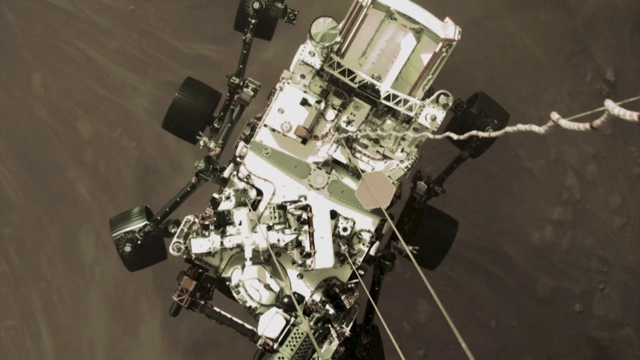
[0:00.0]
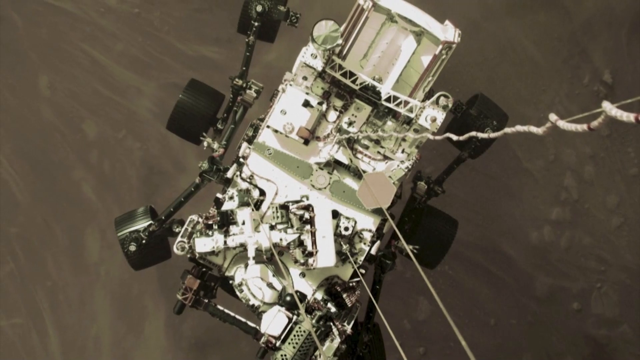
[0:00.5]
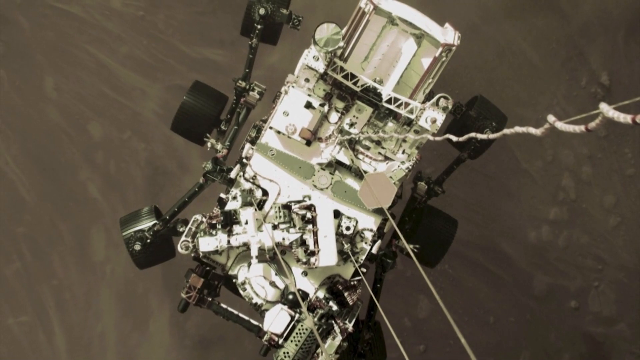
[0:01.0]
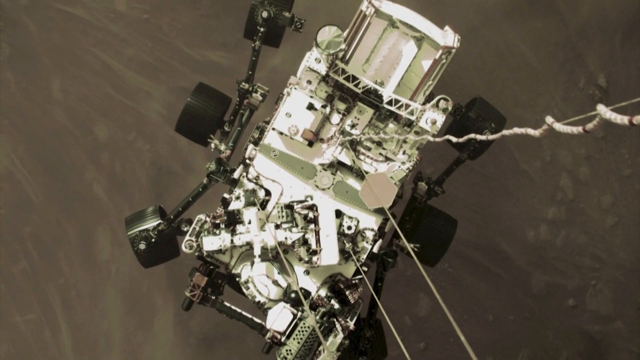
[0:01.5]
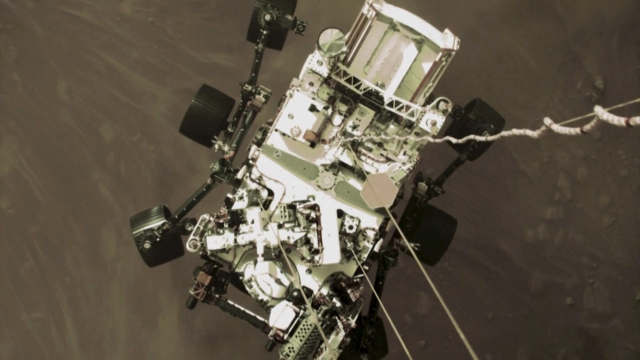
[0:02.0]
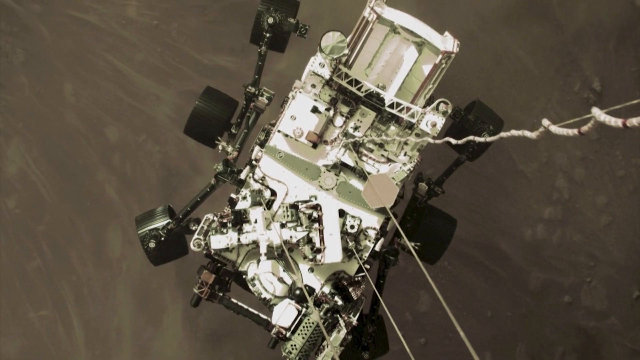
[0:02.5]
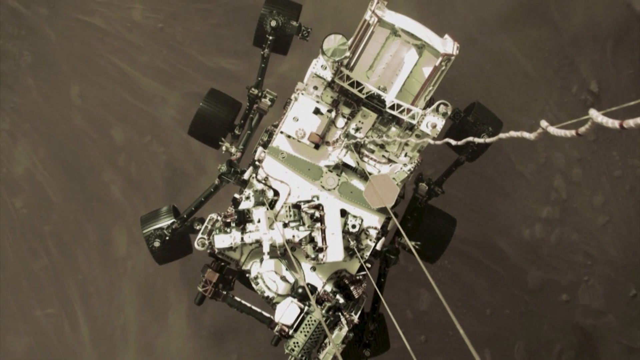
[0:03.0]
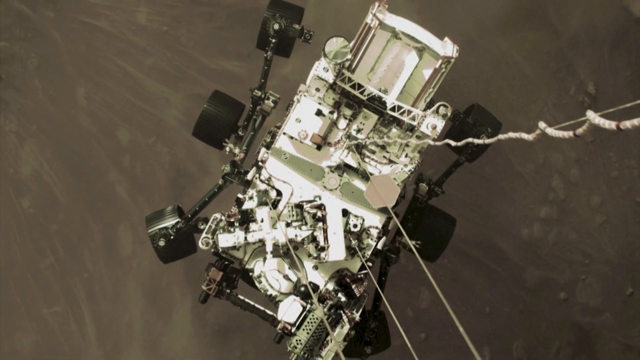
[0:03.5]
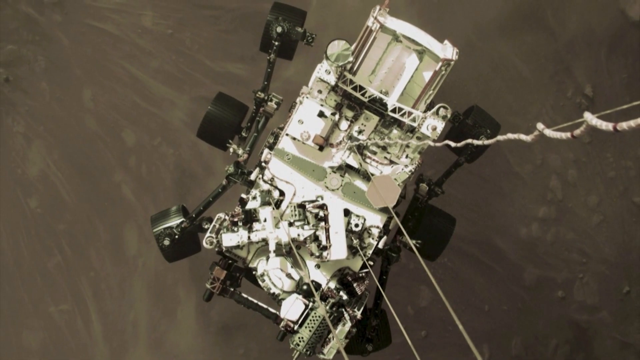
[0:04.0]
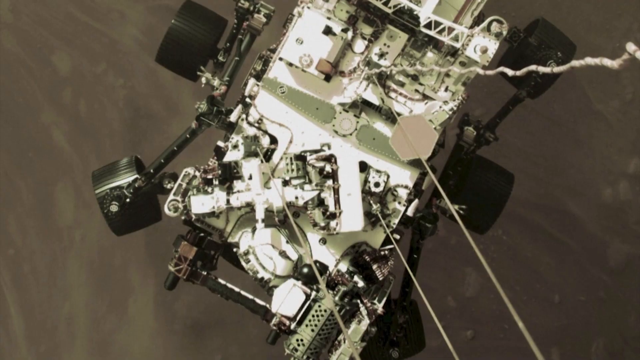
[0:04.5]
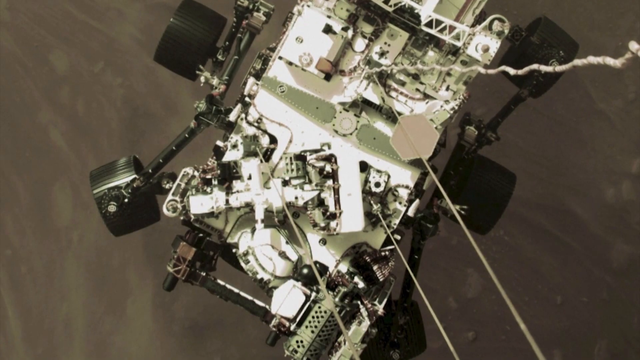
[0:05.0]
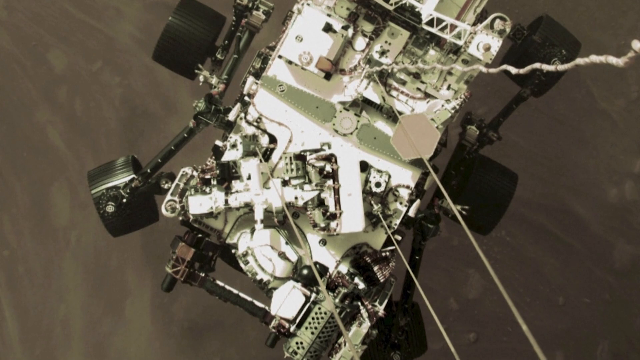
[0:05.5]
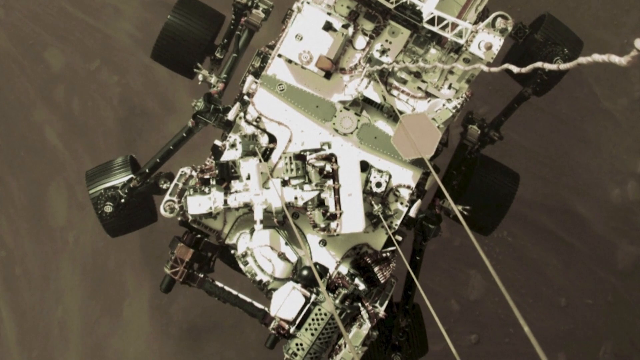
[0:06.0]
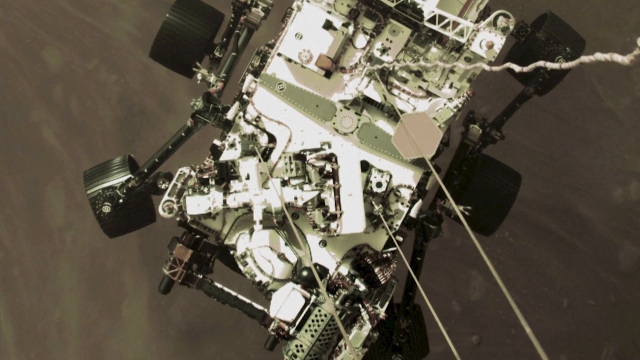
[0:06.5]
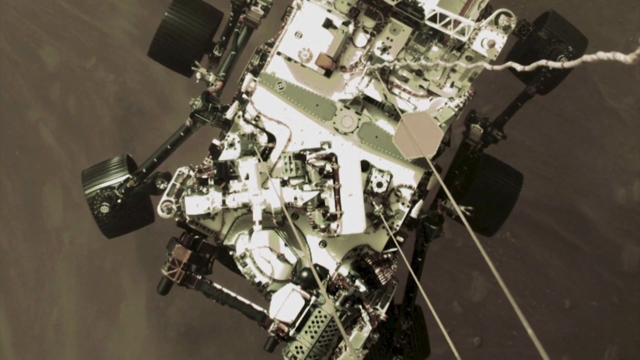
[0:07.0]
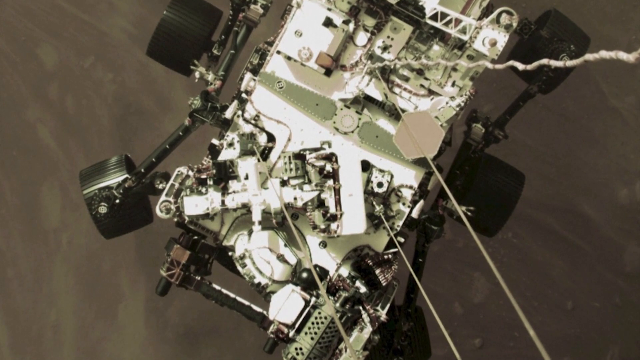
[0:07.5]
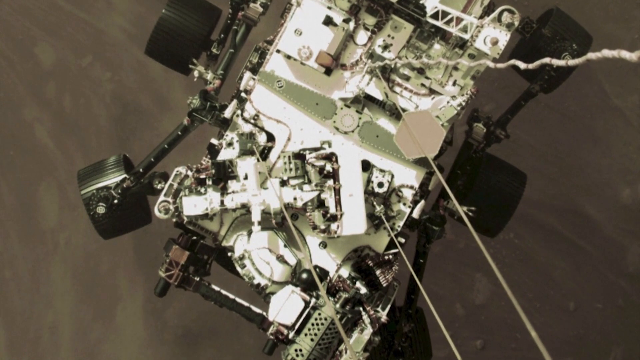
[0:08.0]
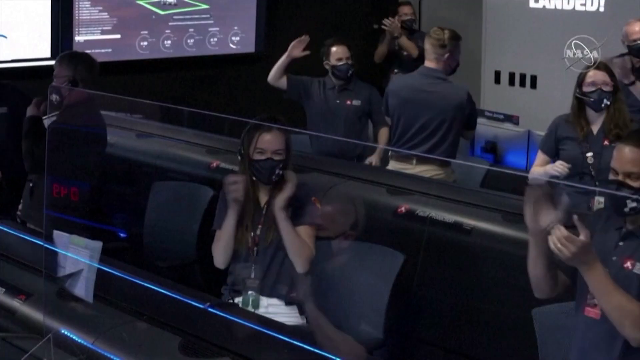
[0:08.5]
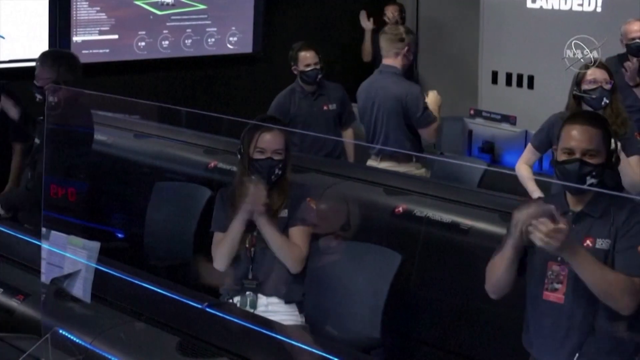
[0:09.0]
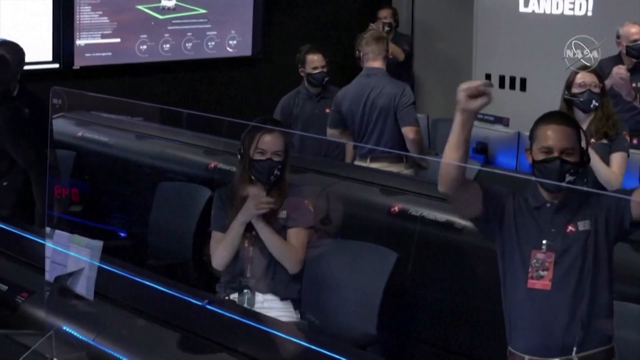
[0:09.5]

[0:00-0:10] Women and men are clapping. The surface of either the moon or Mars is shown, possibly the moon; it does not look red.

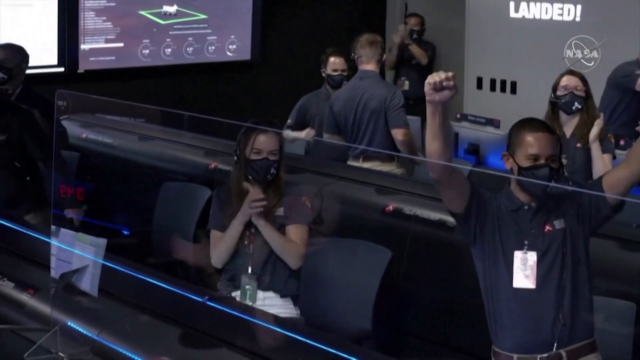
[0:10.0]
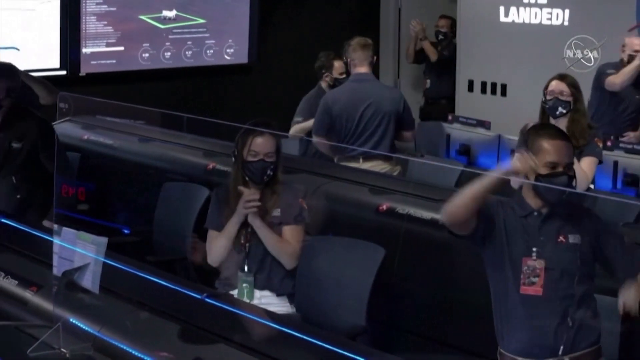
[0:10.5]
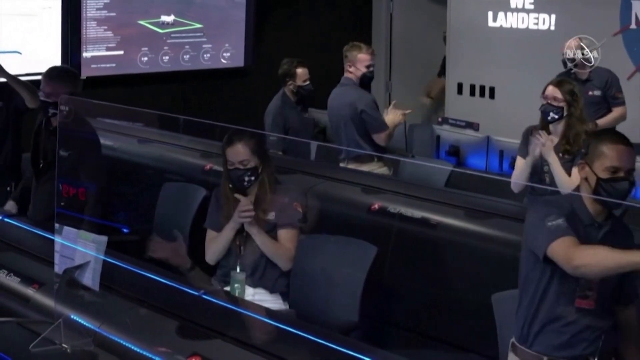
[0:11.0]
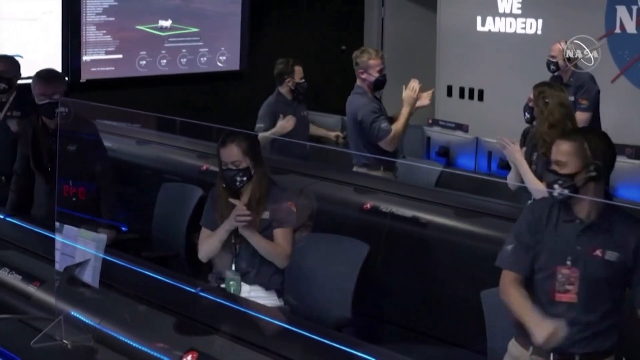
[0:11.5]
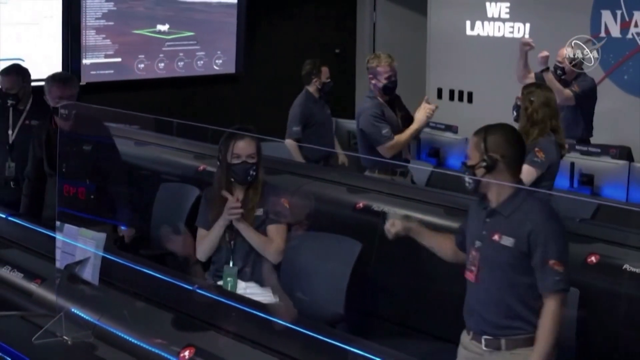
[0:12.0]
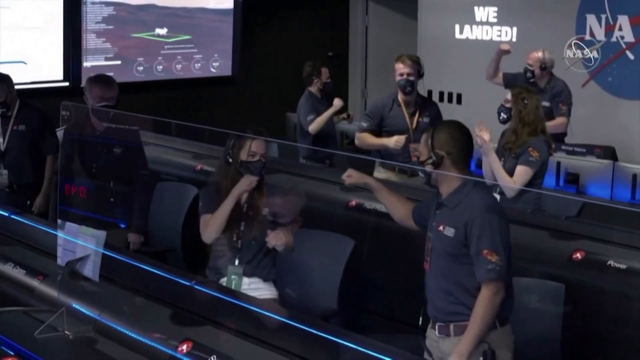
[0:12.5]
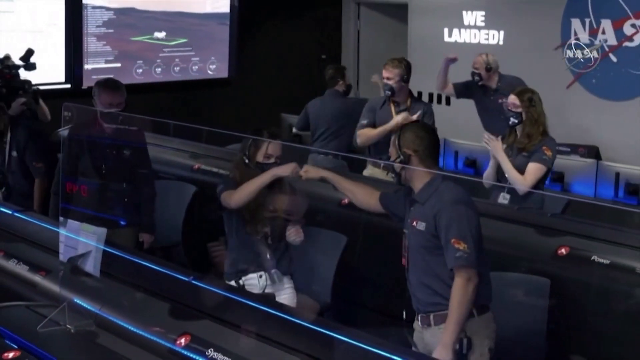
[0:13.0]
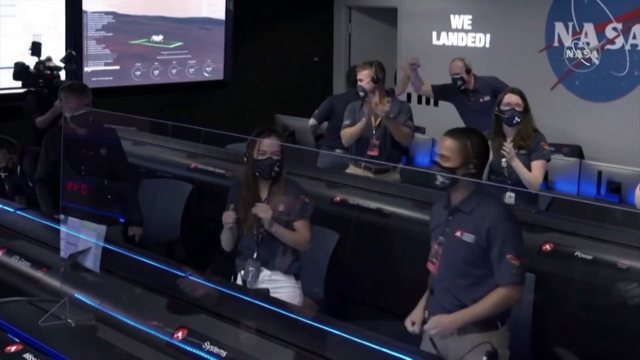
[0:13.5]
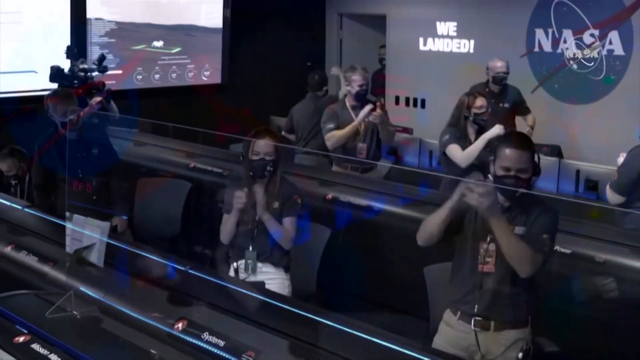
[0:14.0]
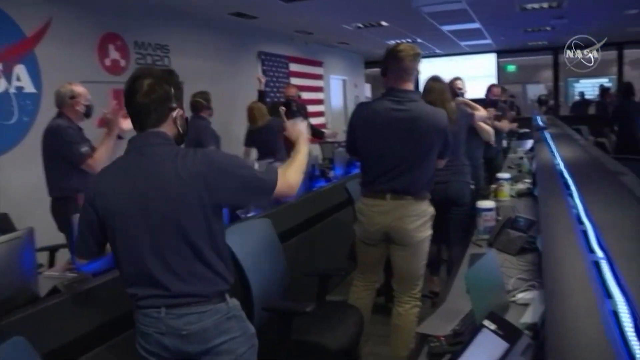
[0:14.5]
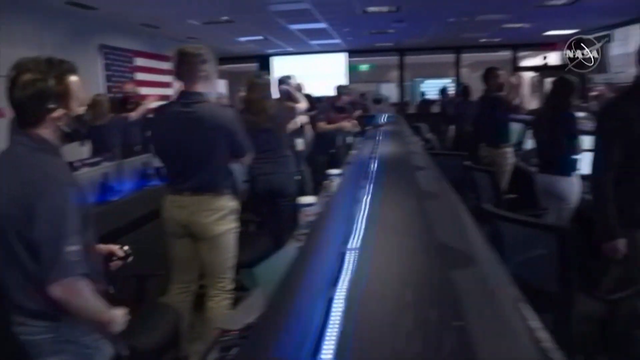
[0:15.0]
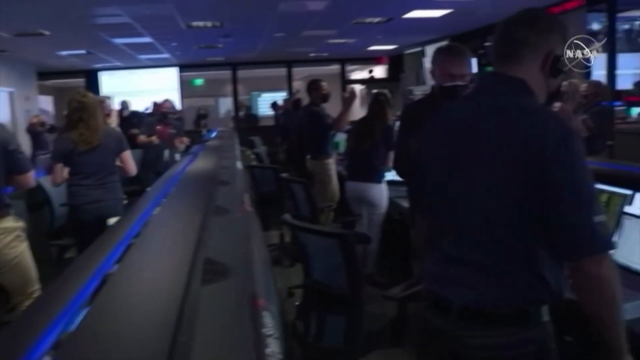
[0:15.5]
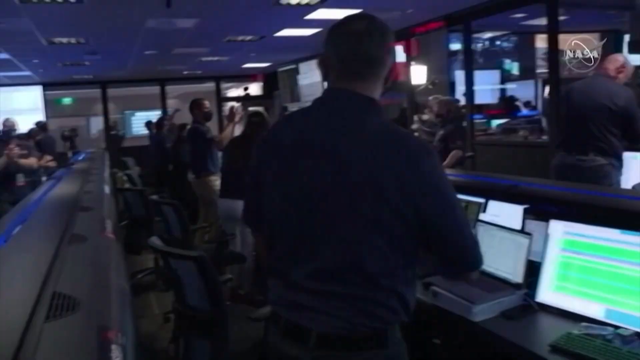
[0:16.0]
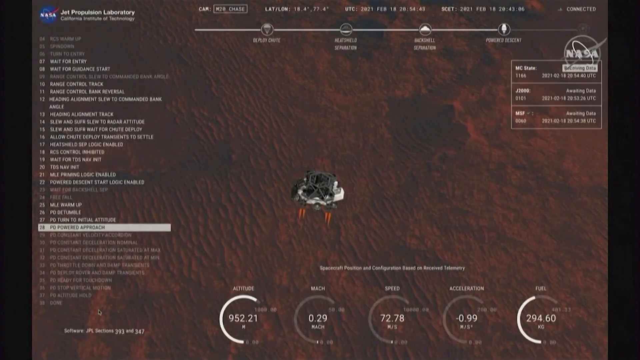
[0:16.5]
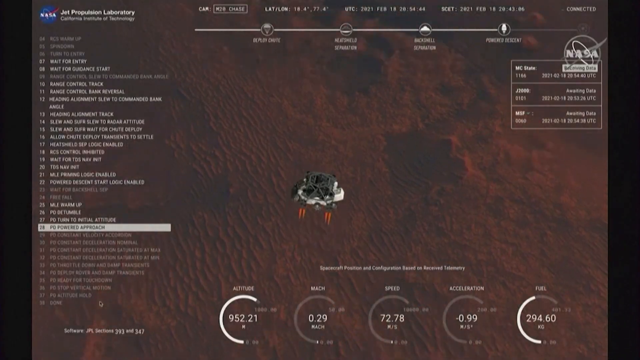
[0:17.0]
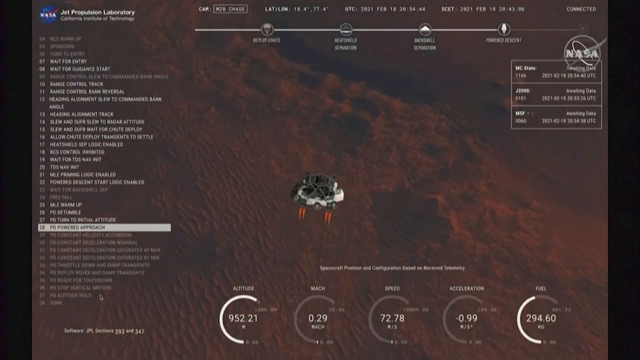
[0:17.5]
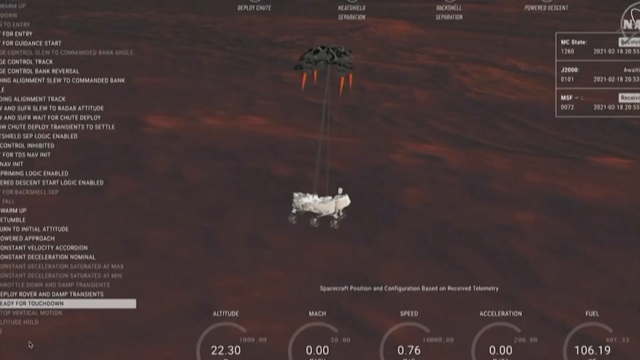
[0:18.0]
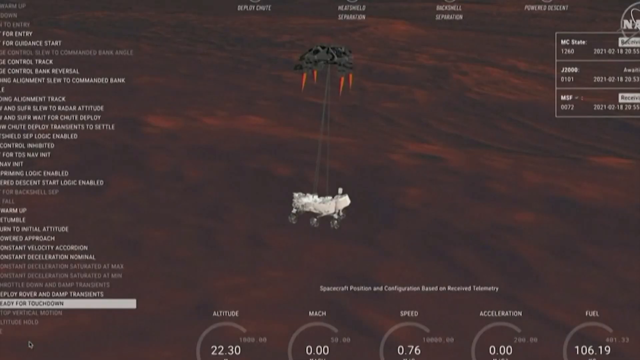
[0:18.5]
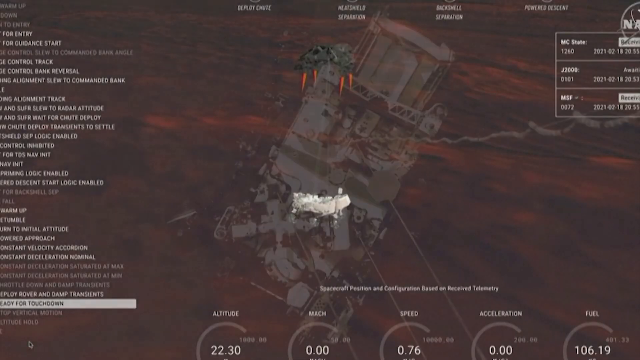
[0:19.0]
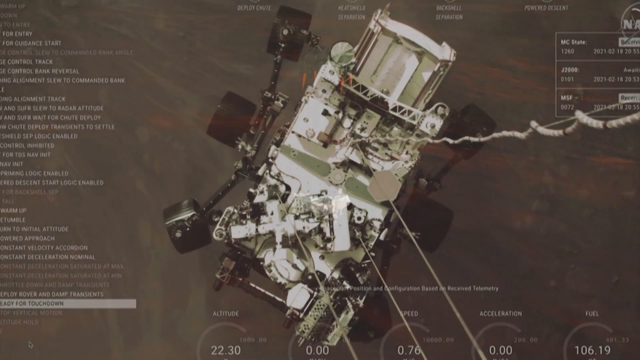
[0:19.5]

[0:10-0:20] Inside a NASA command center, people celebrate the landing of the rover. The color is gray, with gray walls, glass partitions and monitors on the walls. Many people are in the room, wearing masks, and men and women celebrate by clapping, high-fiving and hitting arms in a big celebration. An animation shows the rover landing on the planet.